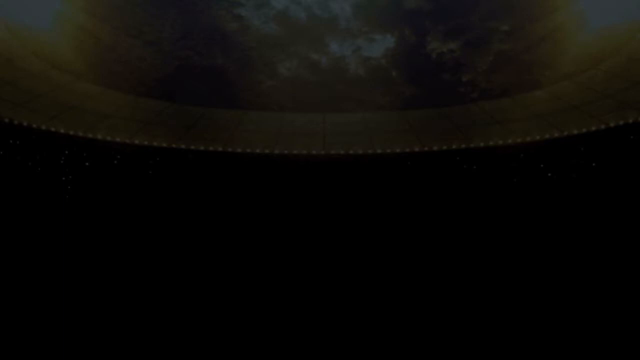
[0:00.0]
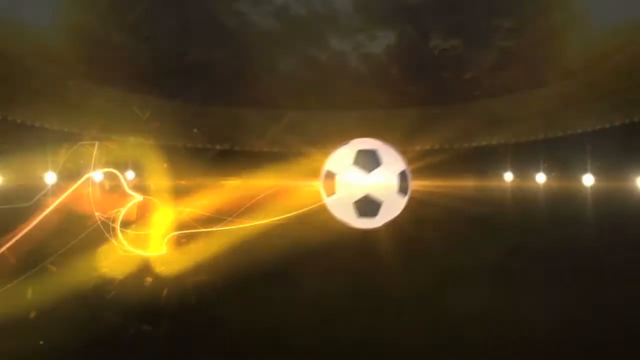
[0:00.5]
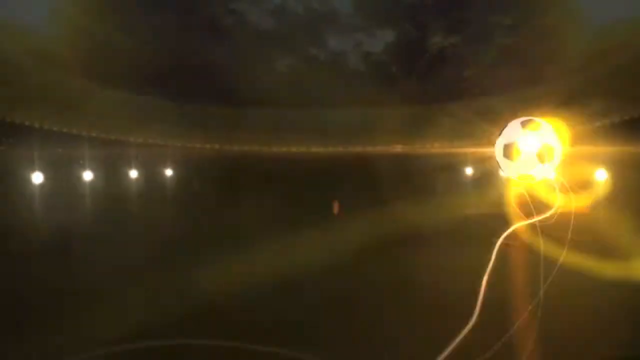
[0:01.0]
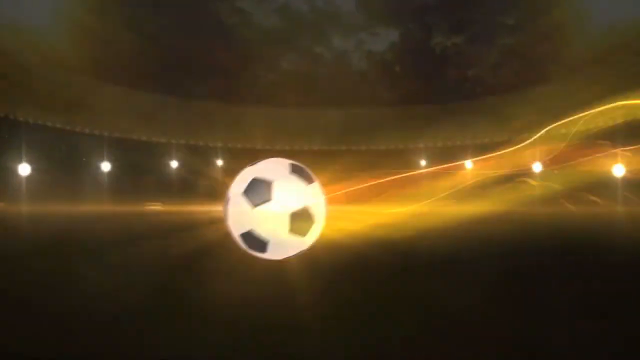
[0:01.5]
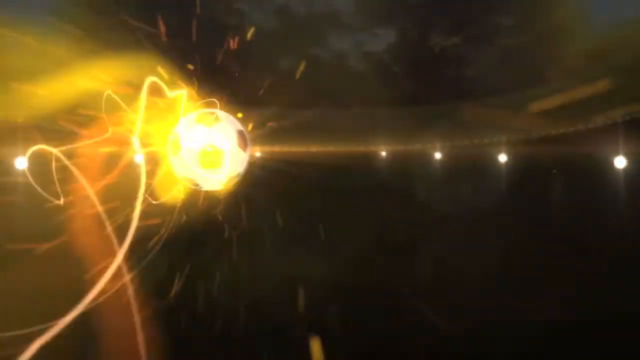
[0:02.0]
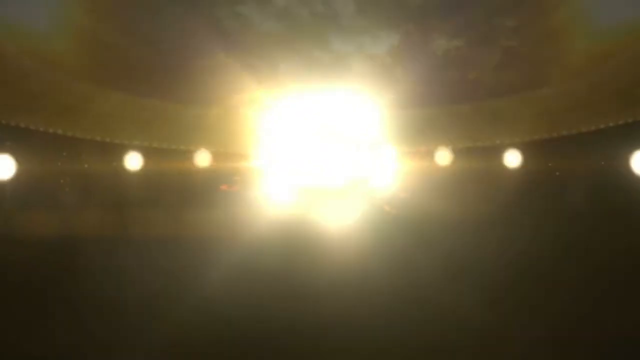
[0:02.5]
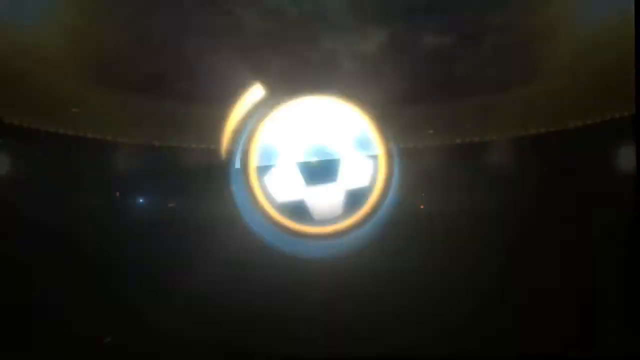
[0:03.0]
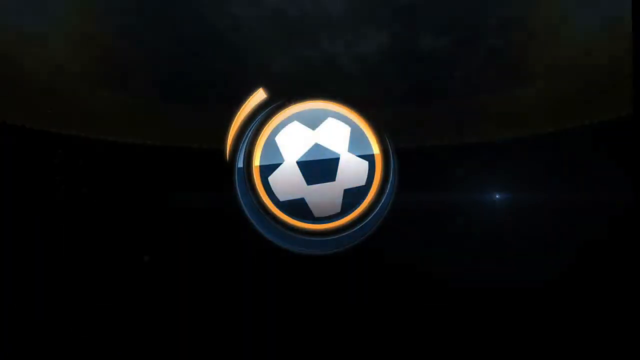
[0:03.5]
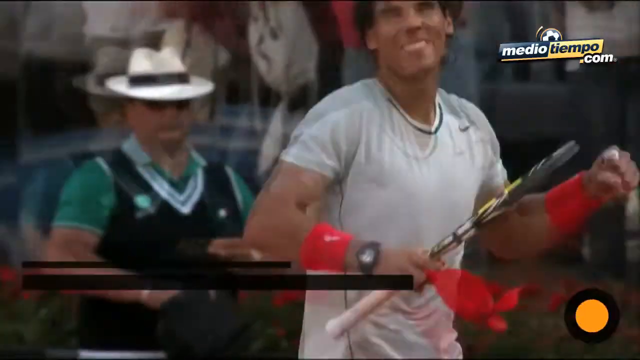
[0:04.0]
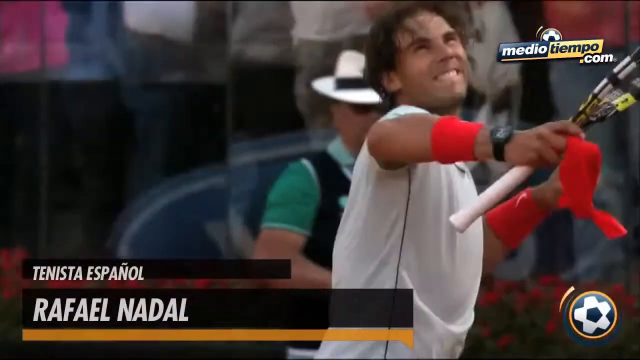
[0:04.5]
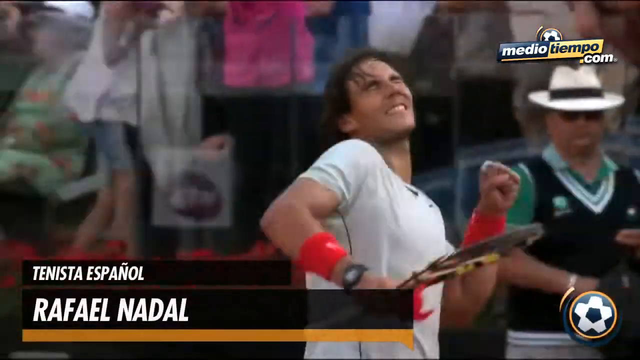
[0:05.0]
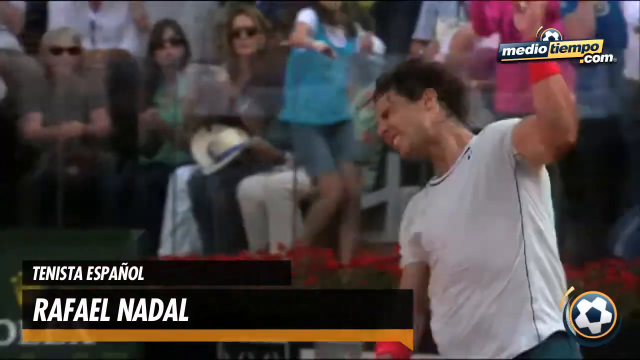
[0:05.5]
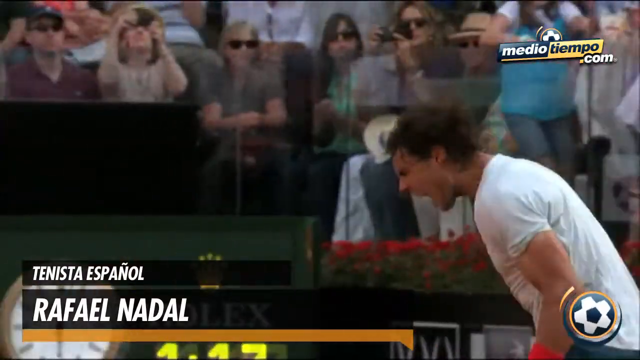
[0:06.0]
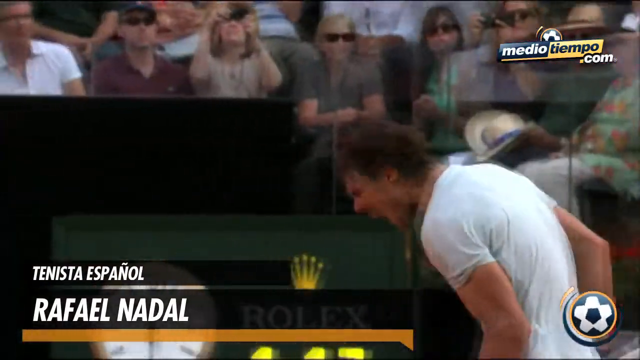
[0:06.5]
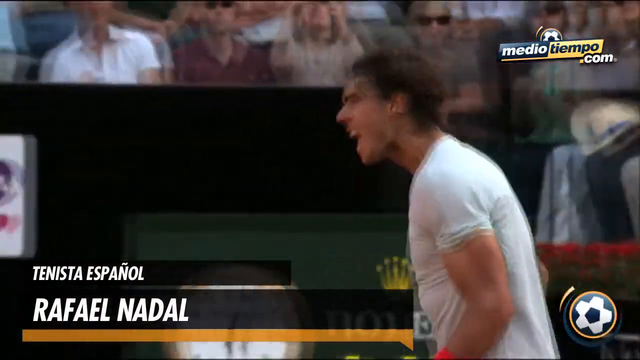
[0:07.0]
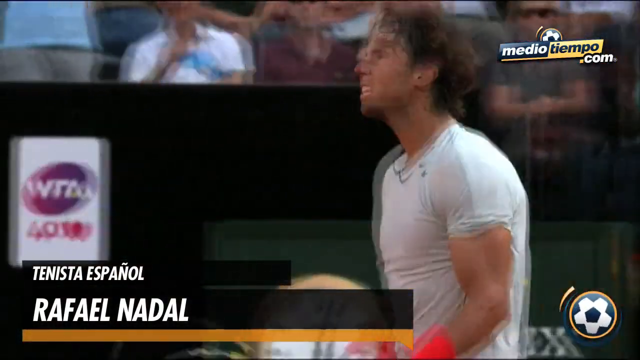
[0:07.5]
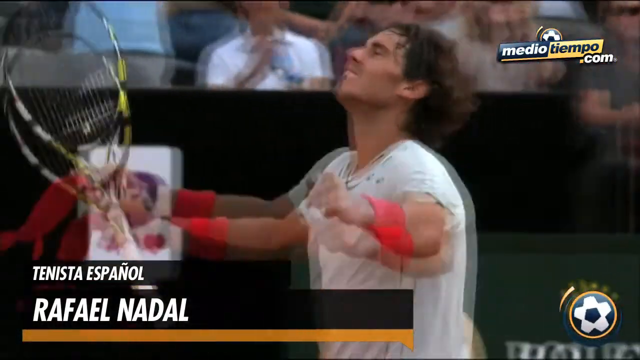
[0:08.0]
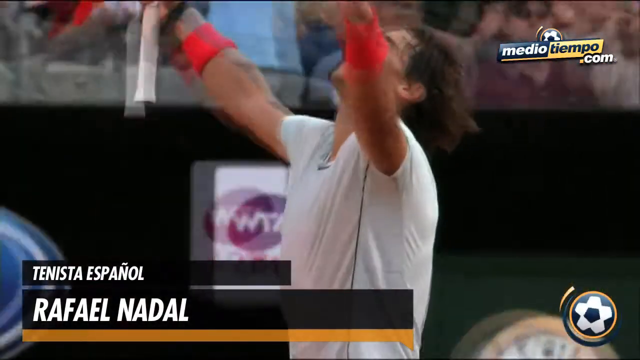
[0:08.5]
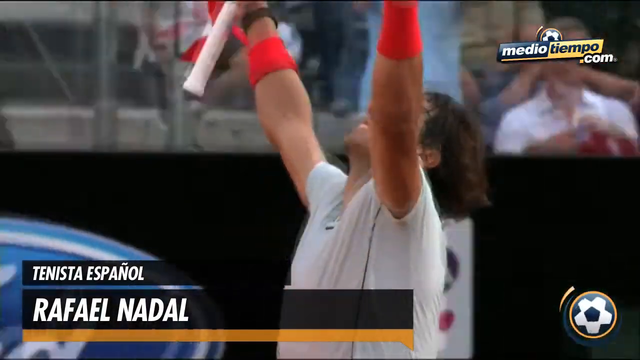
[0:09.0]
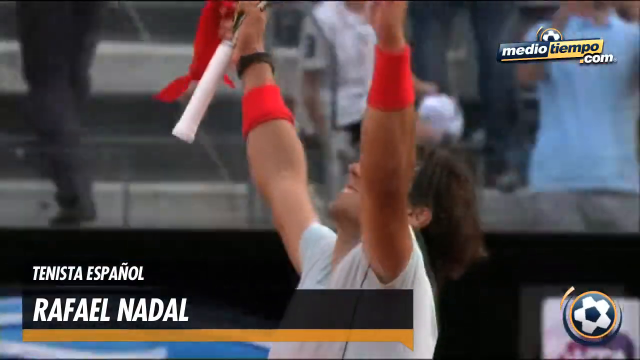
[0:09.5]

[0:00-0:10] A soccer ball races onto the screen as a graphic against a black background, trailing yellow and orange behind it, almost like fire or energy. It hits the back wall of the graphic and turns into a soccer ball logo. The scene then cuts to a person playing what appears to possibly be tennis. The player wears red wristbands and a white shirt and appears to be celebrating. Behind him is a spectator, a man in a white and black fedora with a green shirt under a black sweater. An on-screen graphic reads "Tenista Espanol Rafael Nadal," presumably identifying the tennis player. At the end, he raises his hands in a kind of victorious pose.